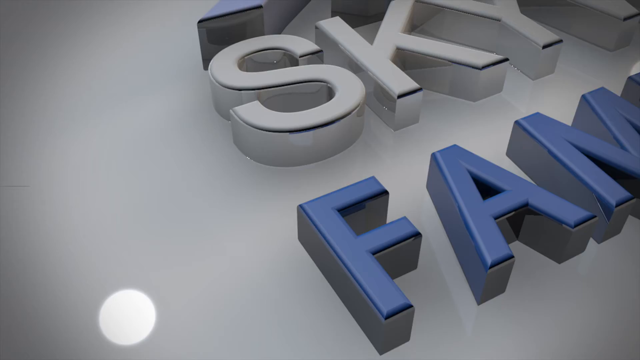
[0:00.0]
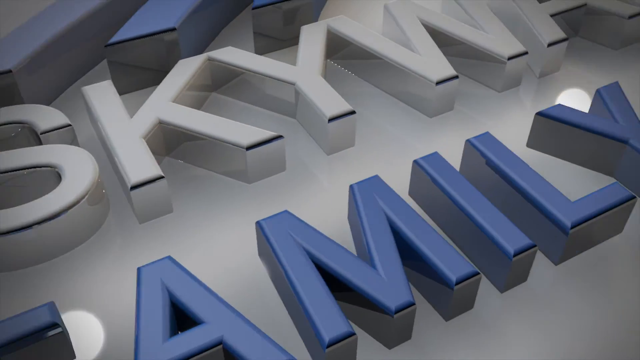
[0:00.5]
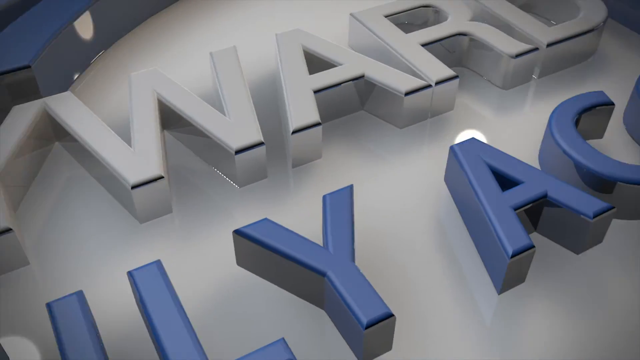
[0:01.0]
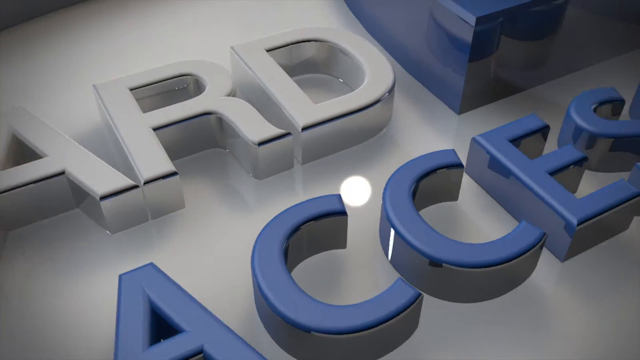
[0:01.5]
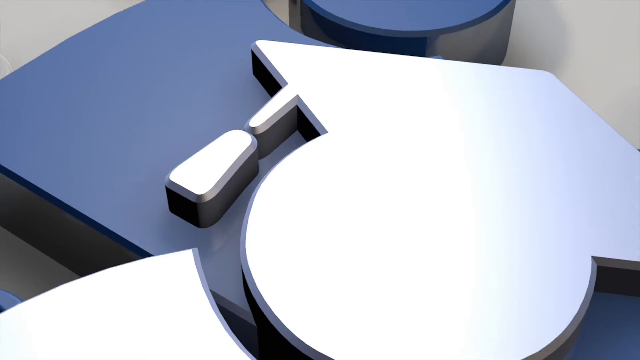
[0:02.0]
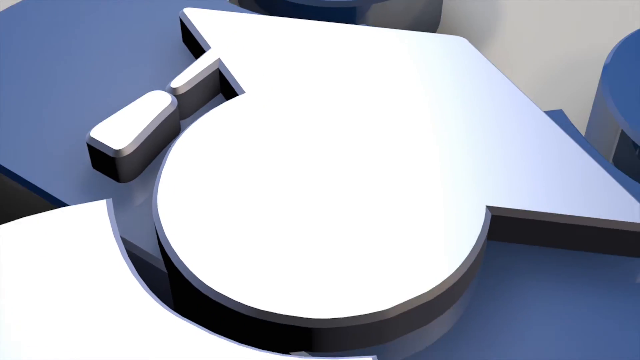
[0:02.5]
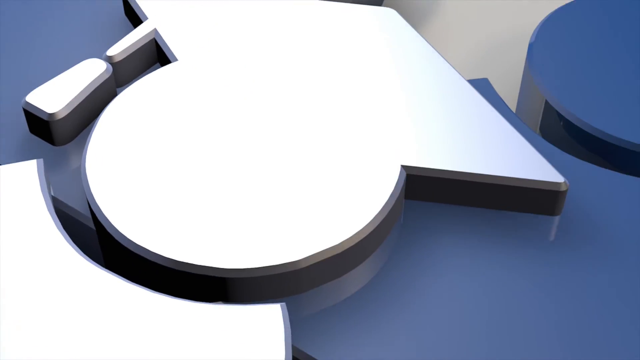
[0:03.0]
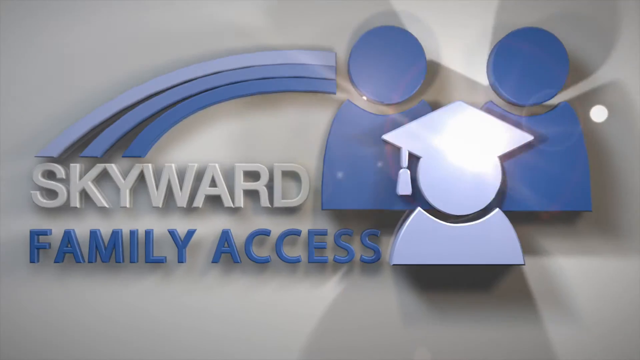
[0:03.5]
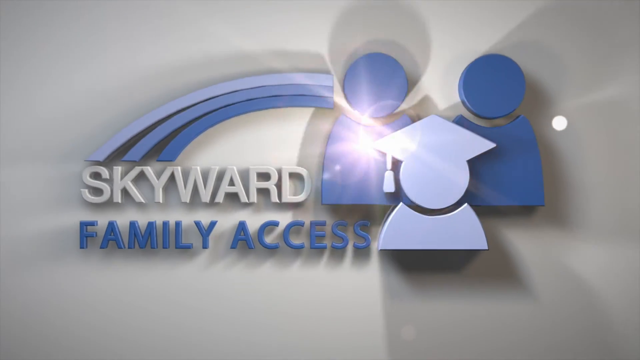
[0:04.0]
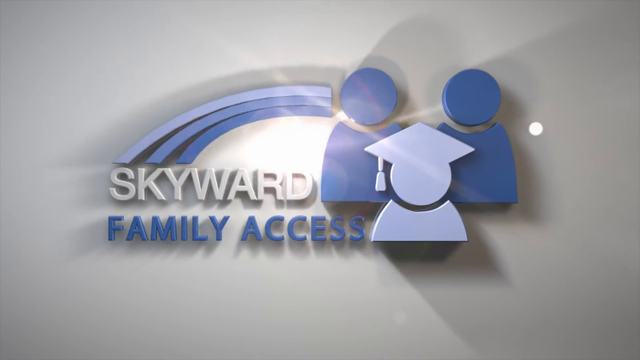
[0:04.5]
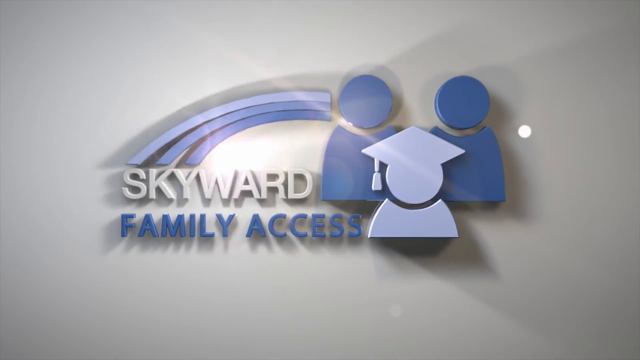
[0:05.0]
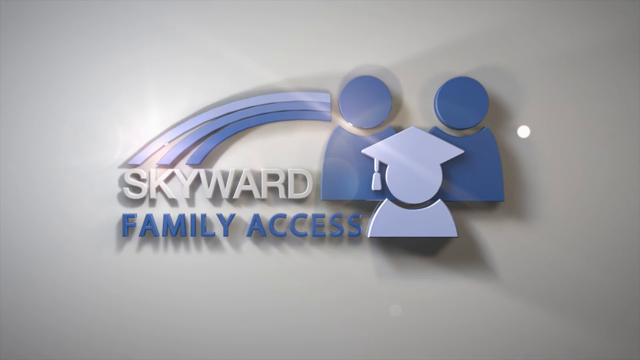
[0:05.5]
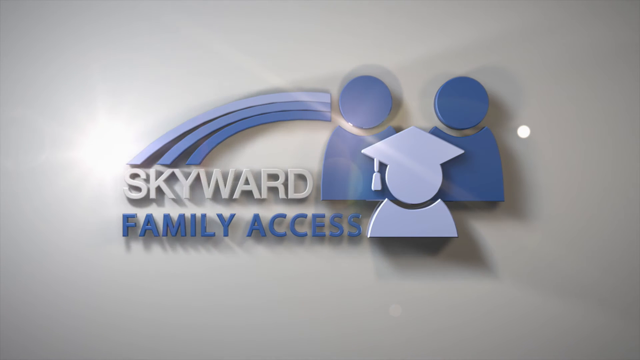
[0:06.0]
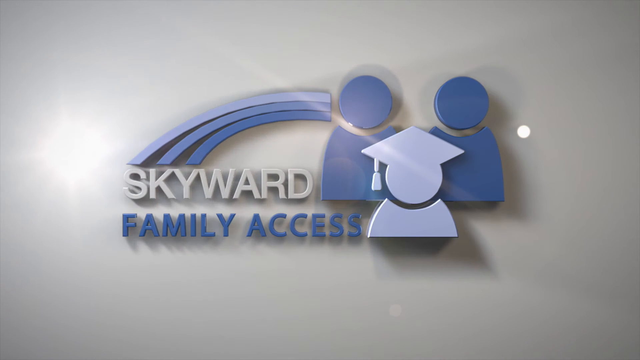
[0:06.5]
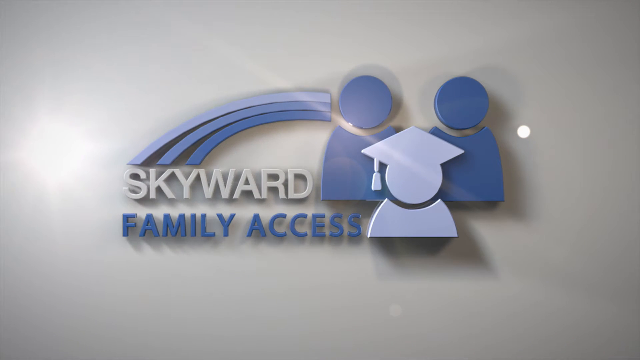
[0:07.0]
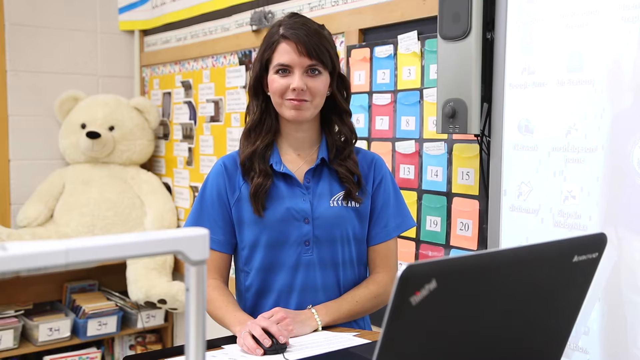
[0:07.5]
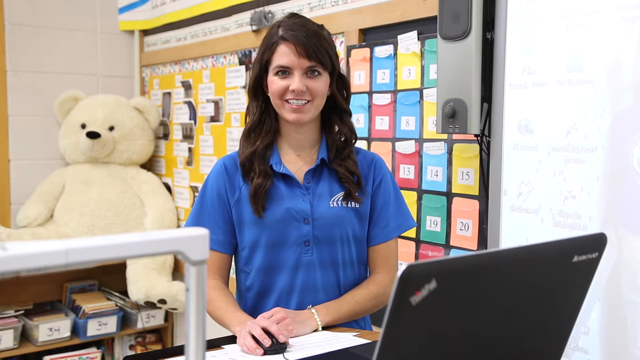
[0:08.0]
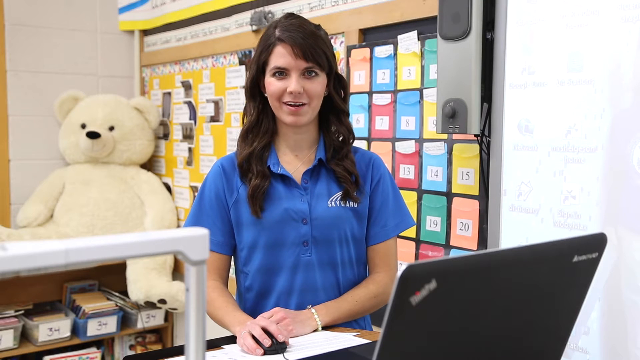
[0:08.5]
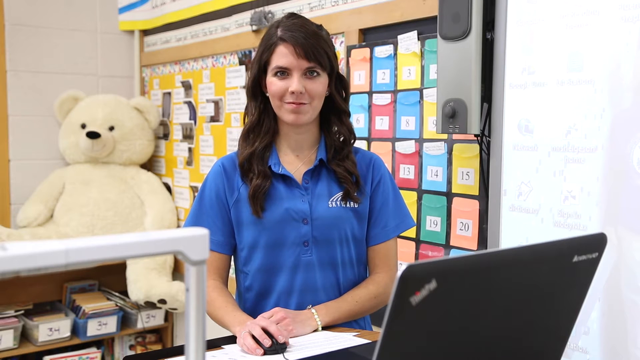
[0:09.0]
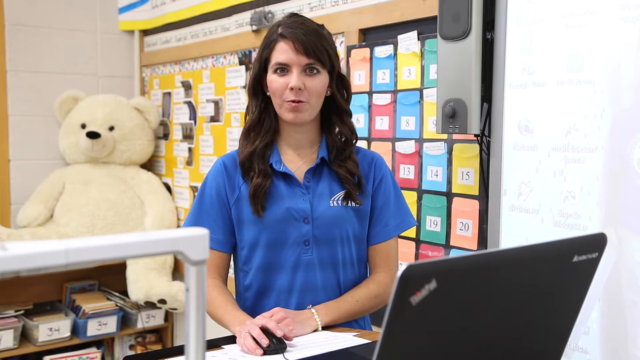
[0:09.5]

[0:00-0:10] An animated intro shows a 3D model of text reading "Skyward Family Access". On the right are silhouettes of a student graduating, with two possibly paternal figures behind the student. The video then shows a woman in front of a laptop. She wears a blue striped blouse and has long, black, wavy hair. On the wall behind her there seem to be quite a few envelopes of different colors, ranging from 1 to 20 or more. Further back, a giant white teddy bear is sitting in the corner.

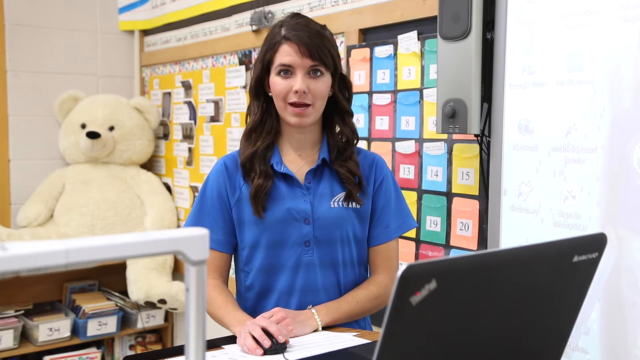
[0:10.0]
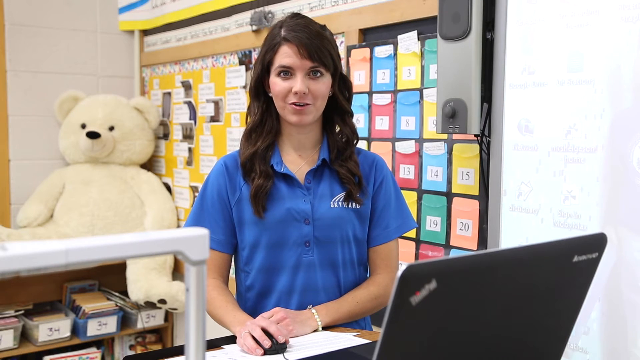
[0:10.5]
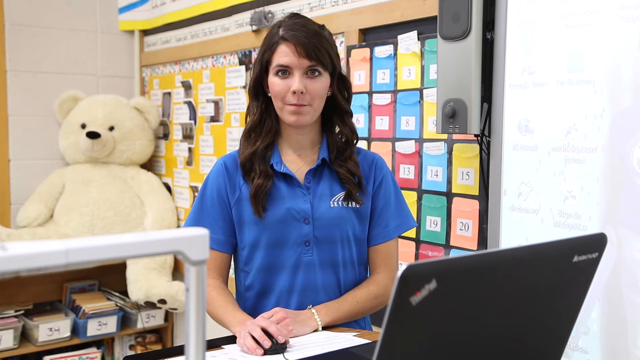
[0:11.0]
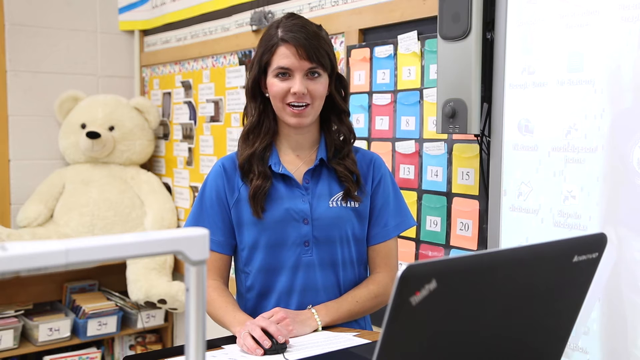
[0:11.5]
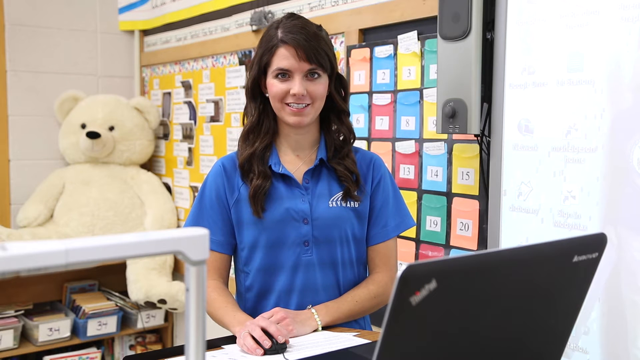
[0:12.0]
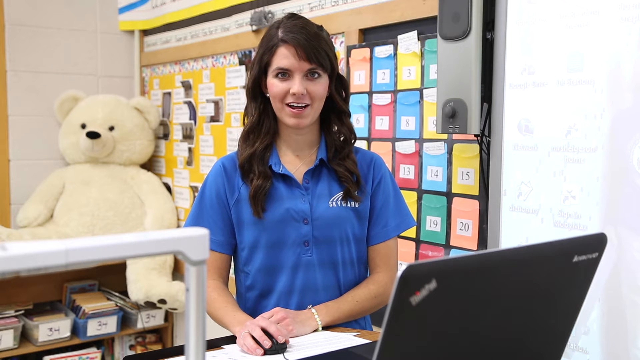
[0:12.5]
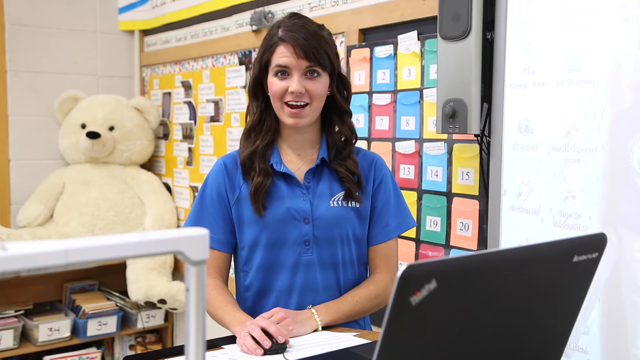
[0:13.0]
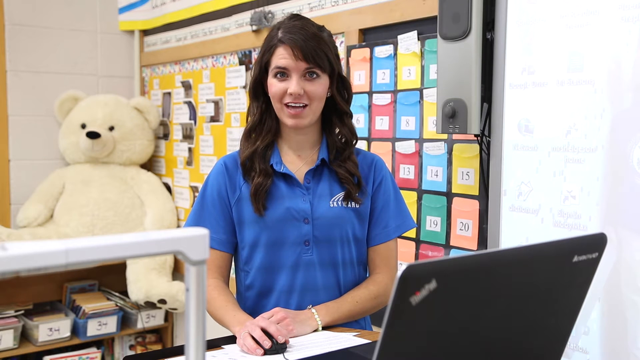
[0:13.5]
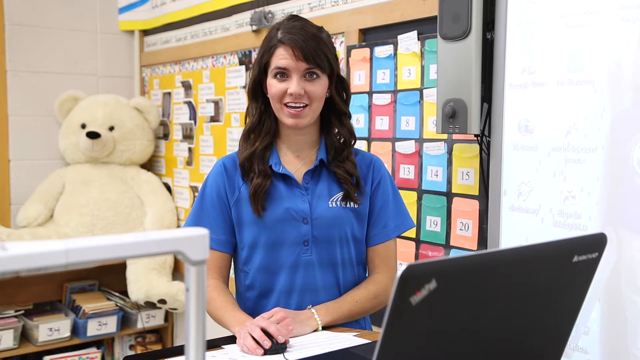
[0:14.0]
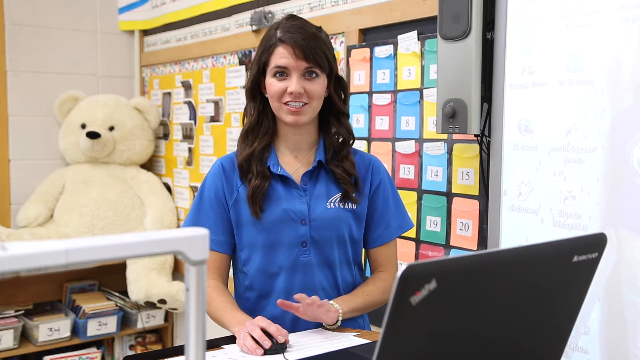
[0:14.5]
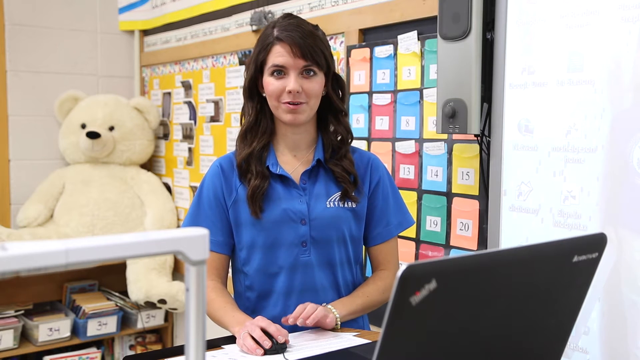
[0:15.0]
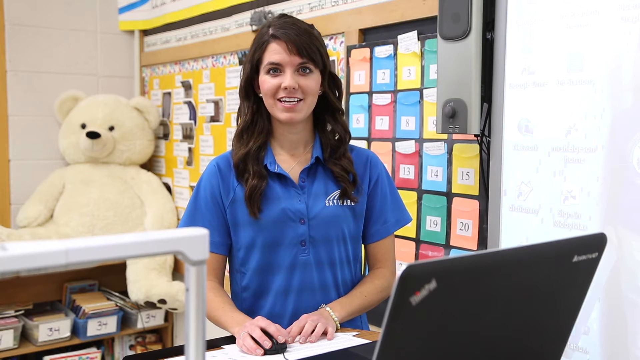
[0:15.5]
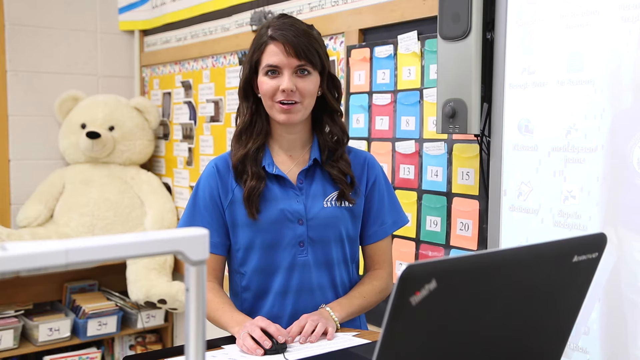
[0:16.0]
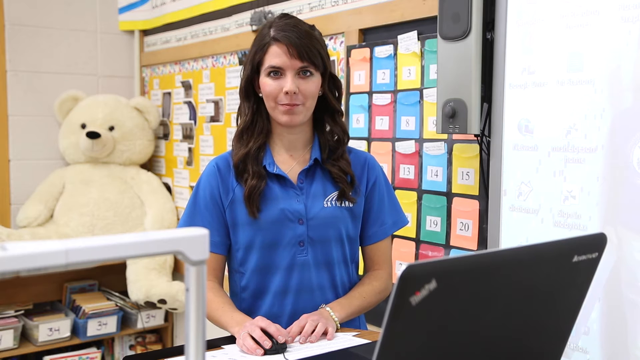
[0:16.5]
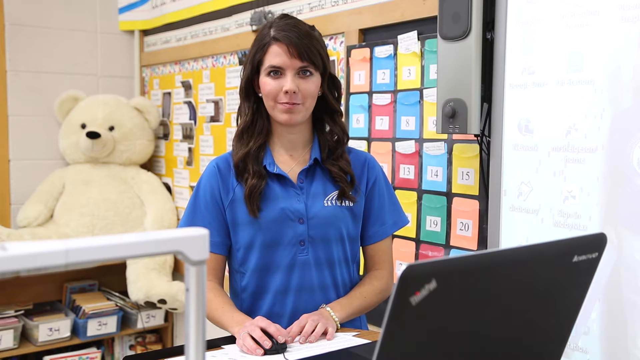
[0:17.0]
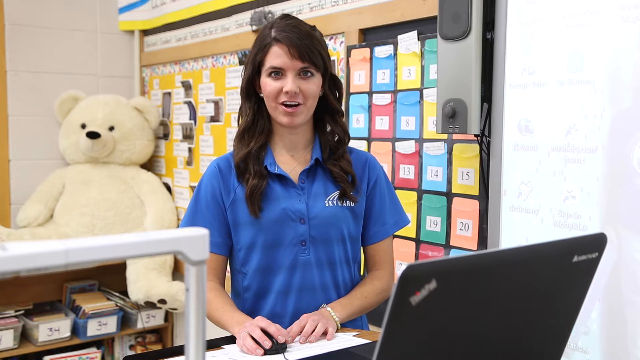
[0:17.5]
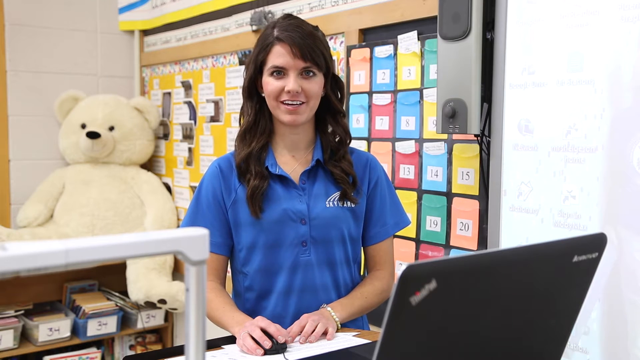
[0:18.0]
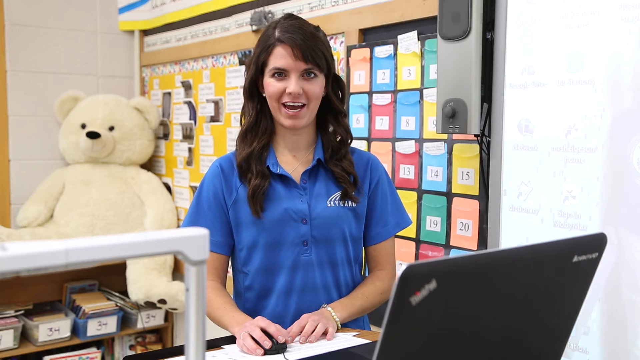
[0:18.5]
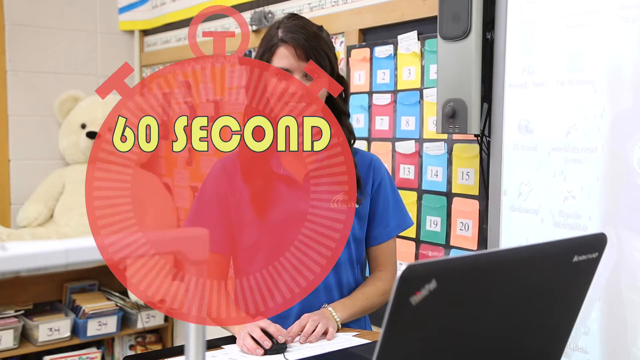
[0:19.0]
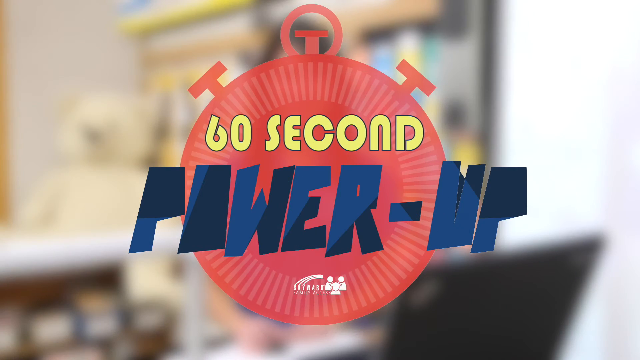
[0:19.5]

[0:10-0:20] The same woman seems to be saying or explaining something, presenting it with emotion. She looks happy, smiling constantly, with very calm body language; her hands are quiet, in front of her. Suddenly a timer icon appears on the screen with text in front of it that says "60 second, power up". The timer icon is red and transparent, and the background of the screen turns blurry. Below this title, the Skyward Family Access logo is present again.